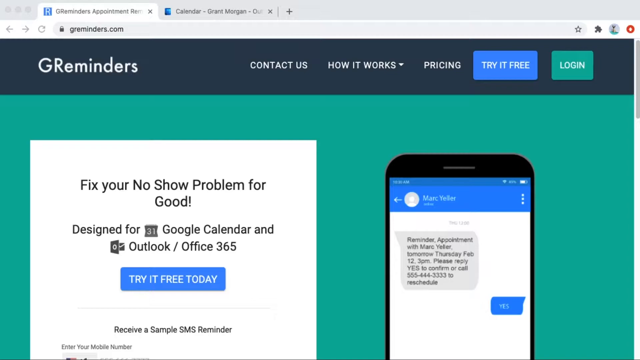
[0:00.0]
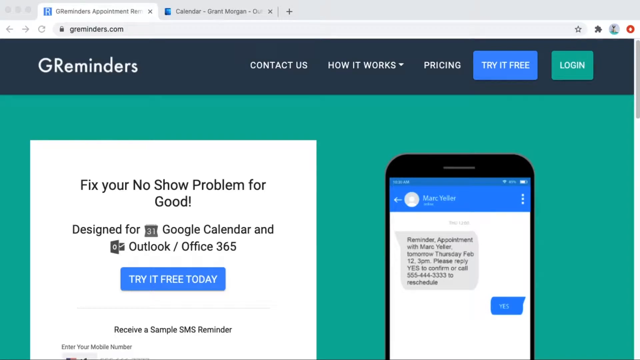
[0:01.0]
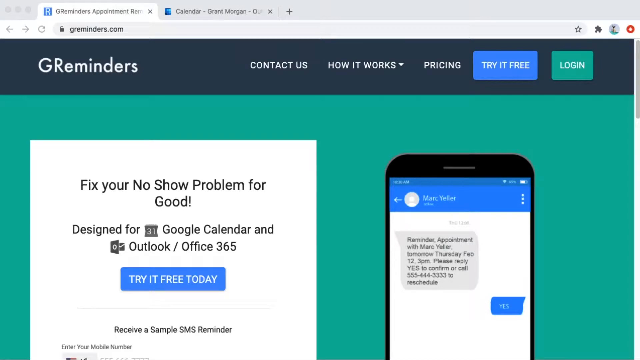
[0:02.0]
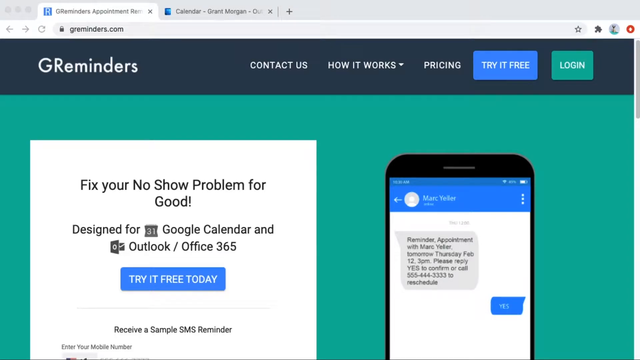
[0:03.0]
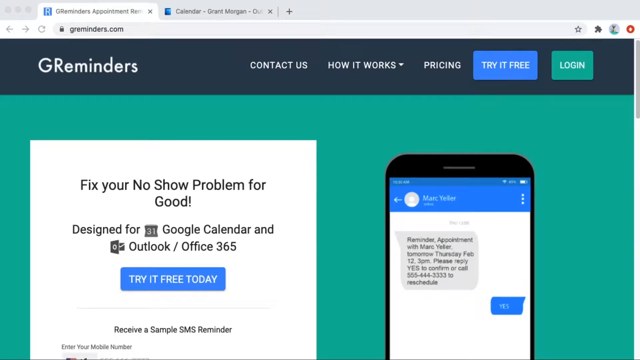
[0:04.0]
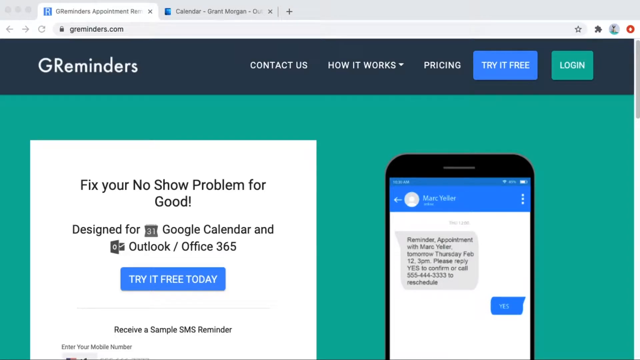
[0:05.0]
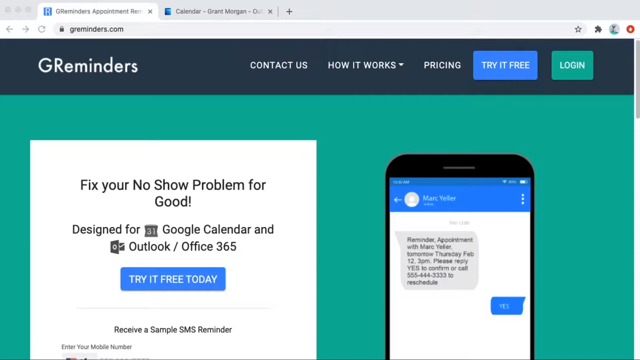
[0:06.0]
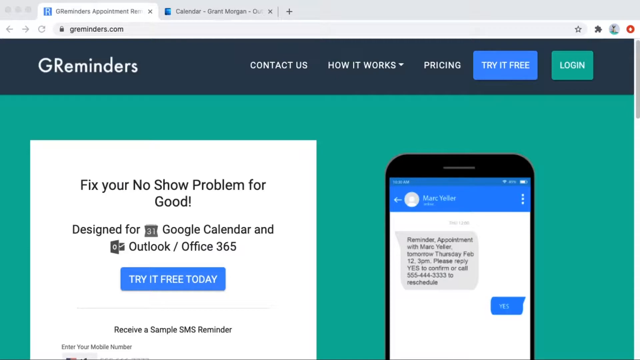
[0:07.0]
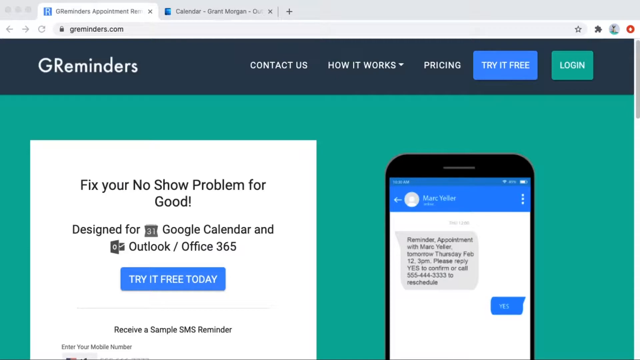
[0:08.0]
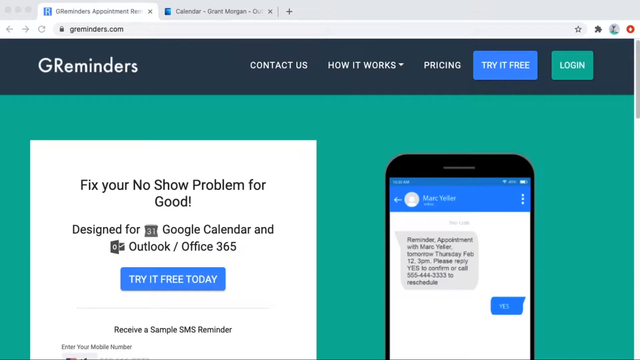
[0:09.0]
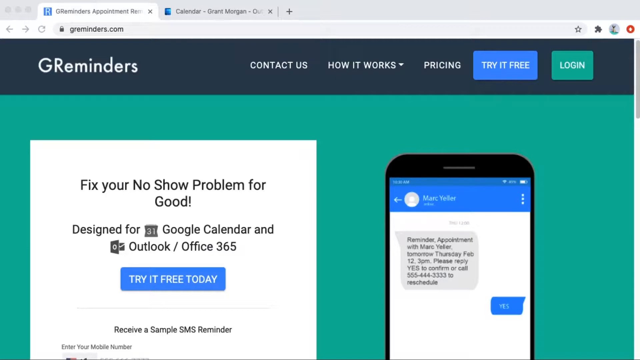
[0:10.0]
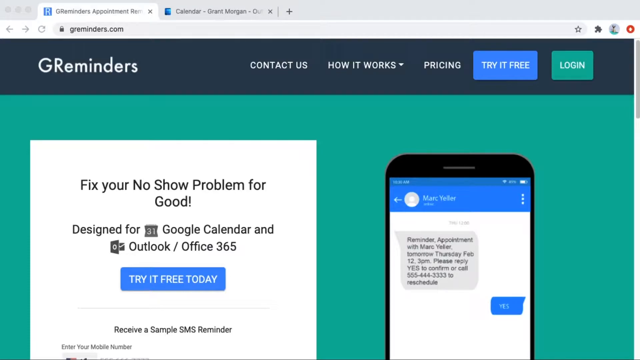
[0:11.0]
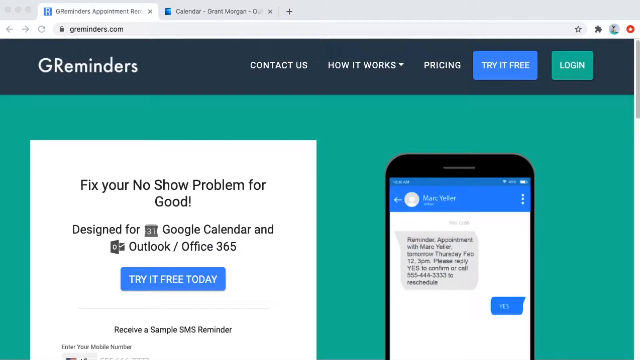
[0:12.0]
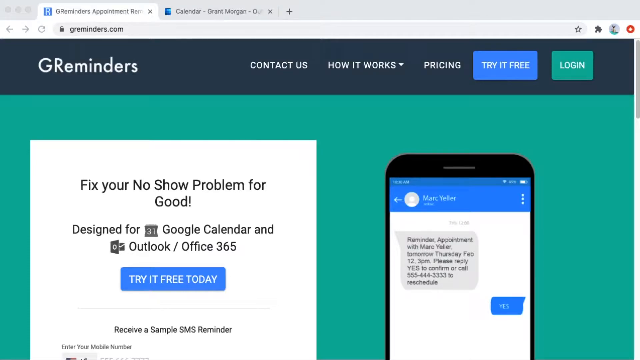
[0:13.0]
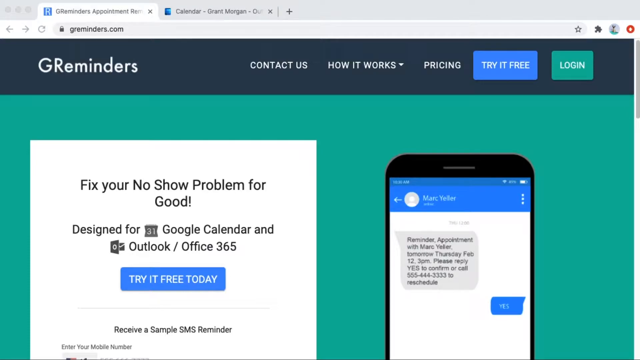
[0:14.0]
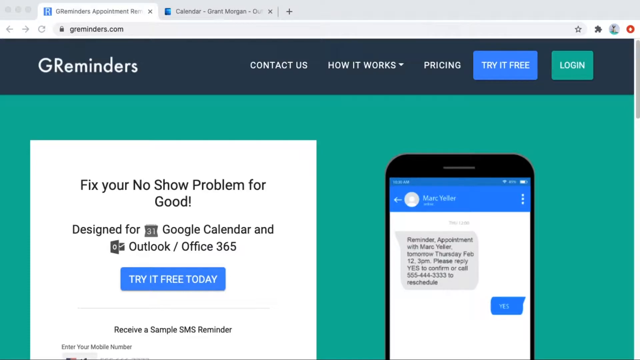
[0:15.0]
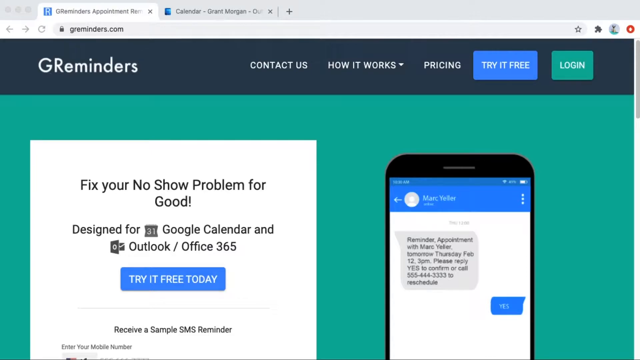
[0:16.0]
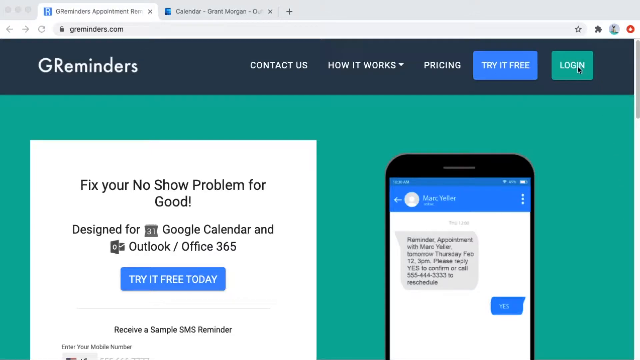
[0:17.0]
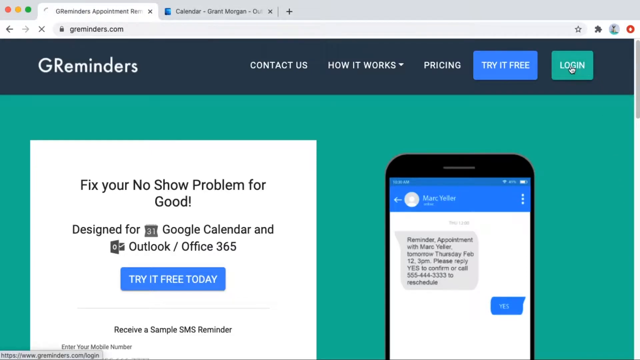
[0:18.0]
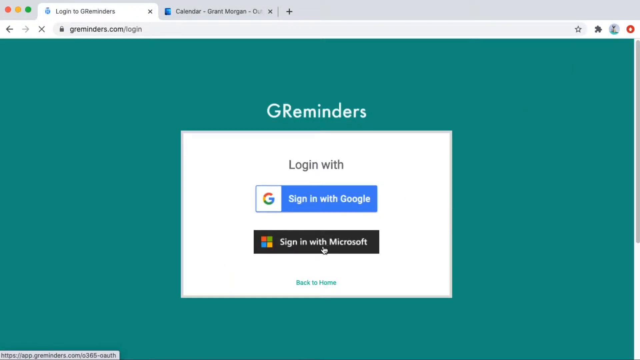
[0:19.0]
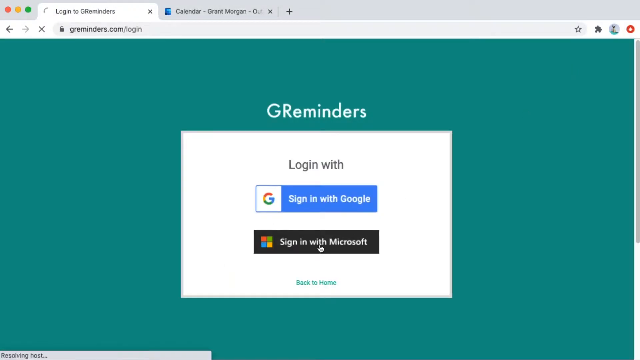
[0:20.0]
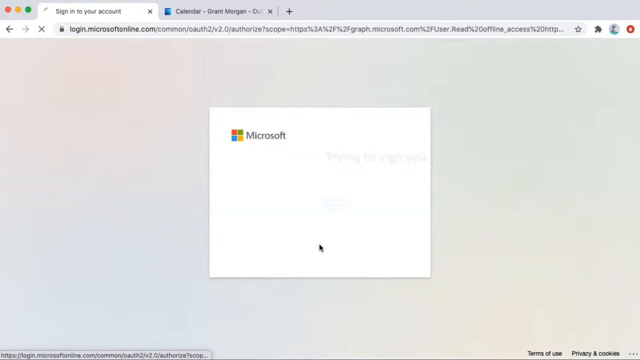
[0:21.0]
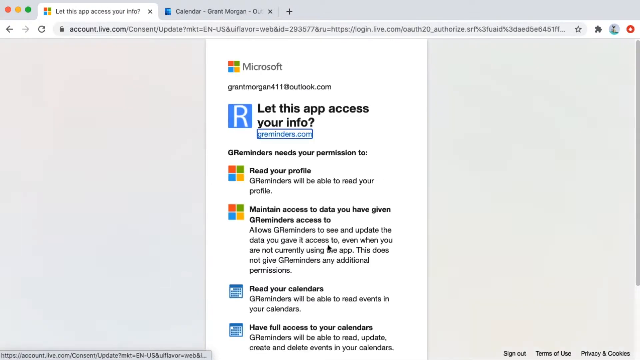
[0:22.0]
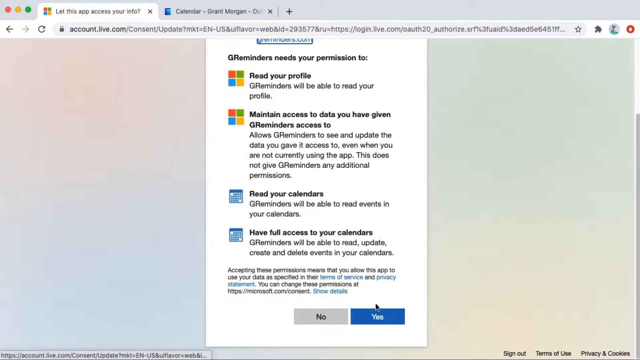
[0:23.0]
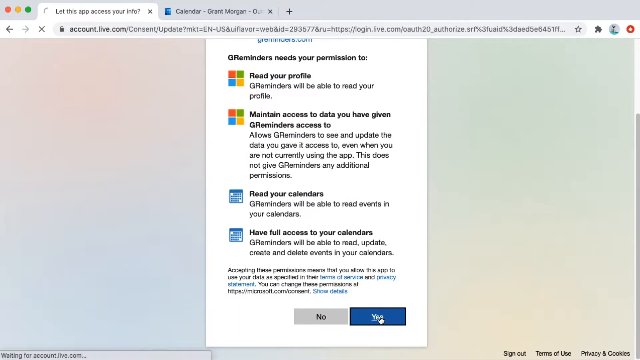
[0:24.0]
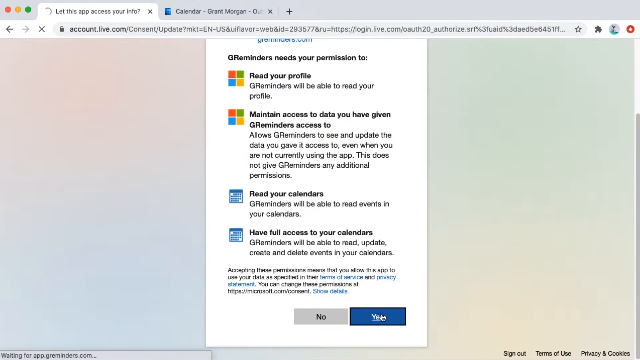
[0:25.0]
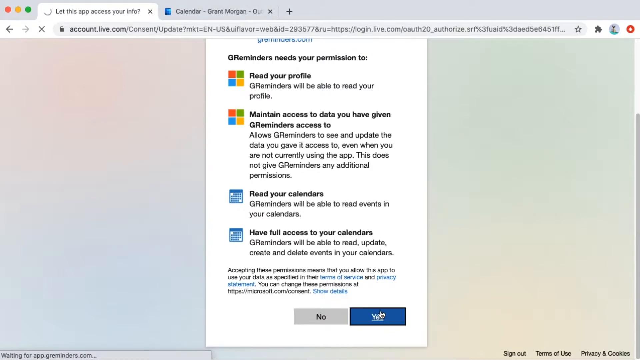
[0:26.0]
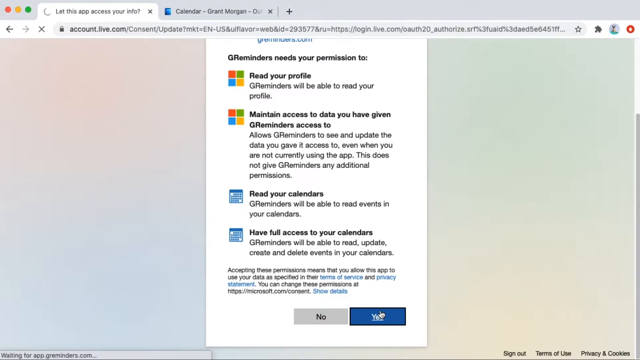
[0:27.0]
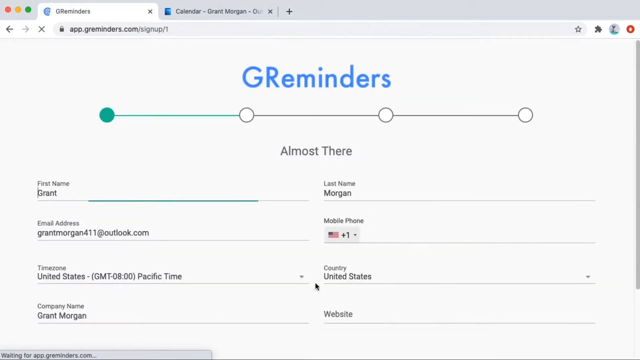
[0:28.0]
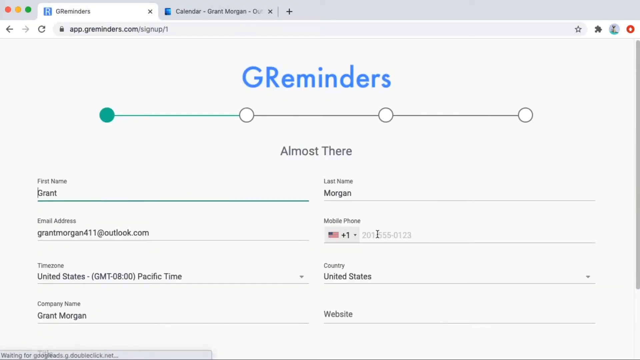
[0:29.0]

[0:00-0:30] A person is shown a website, GR reminders, with the text "Fix your no-show problem for good", "designed for Google Calendar and Outlook or Office 365" and "Receive a sample SMS reminder" on its main page. The person then logs into the website with Microsoft. A Microsoft prompt for the user Grant Morgan appears, stating that G reminders needs permission to read his profile, maintain access to data he has given it access to, read his calendars and have full access to his calendars. The person accepts. This is all done in Google Chrome.